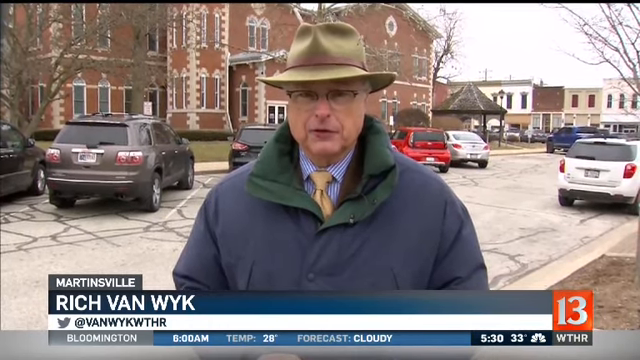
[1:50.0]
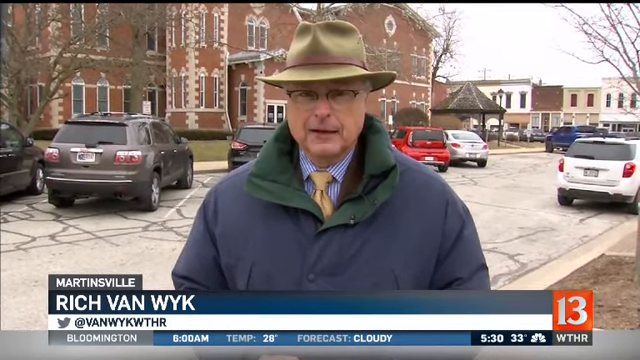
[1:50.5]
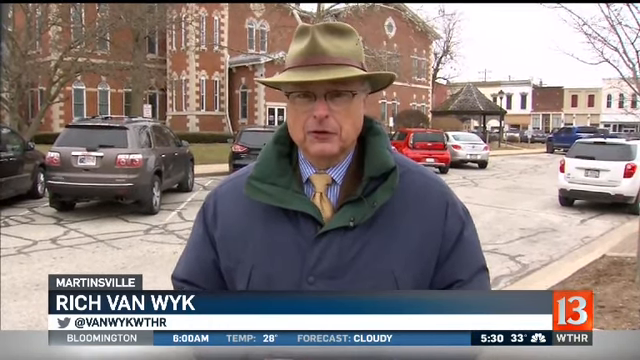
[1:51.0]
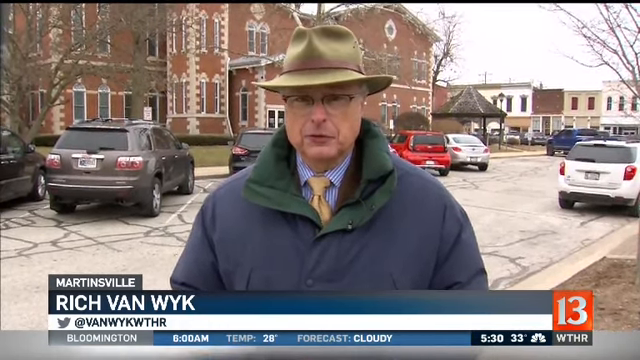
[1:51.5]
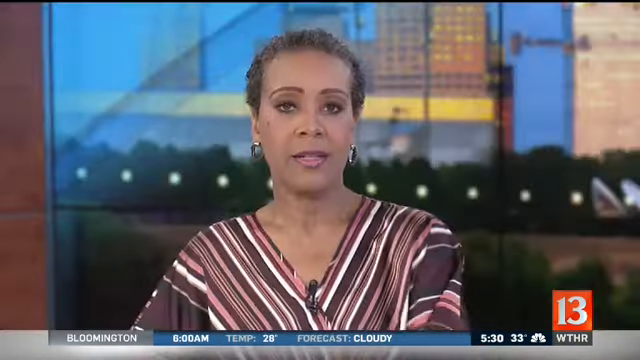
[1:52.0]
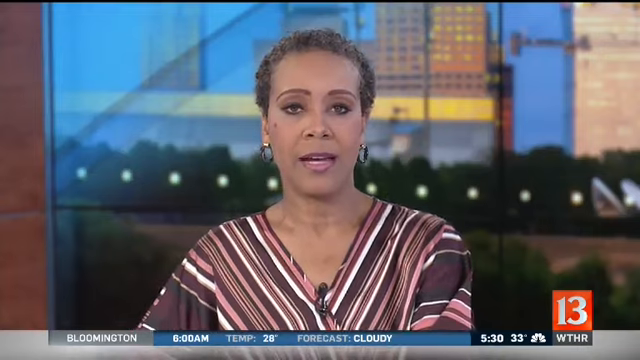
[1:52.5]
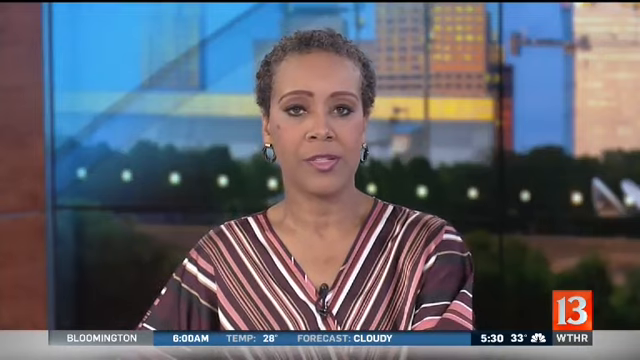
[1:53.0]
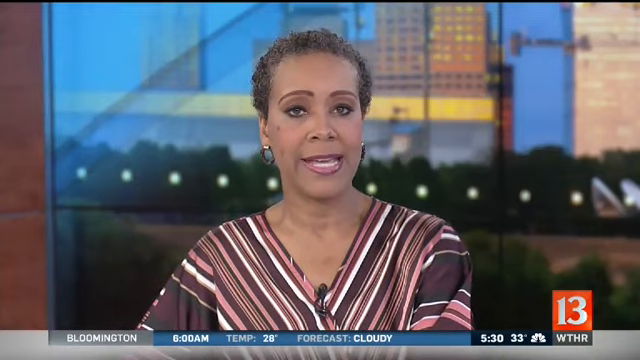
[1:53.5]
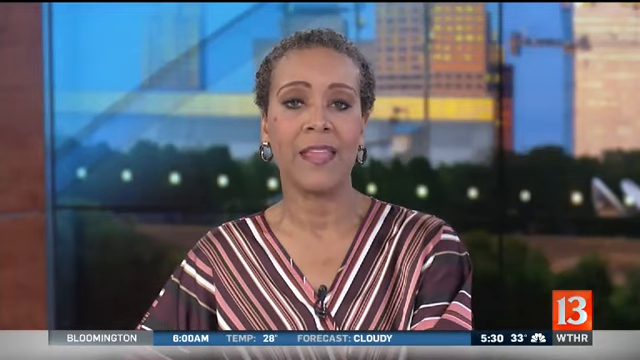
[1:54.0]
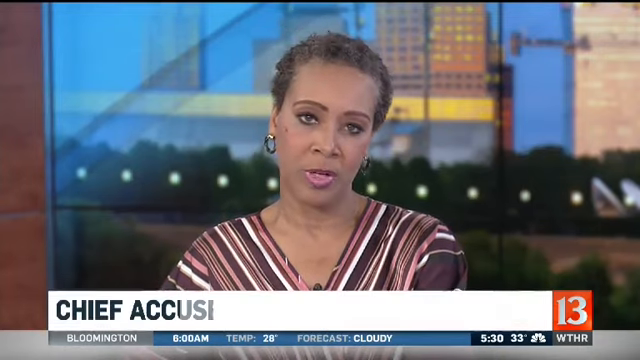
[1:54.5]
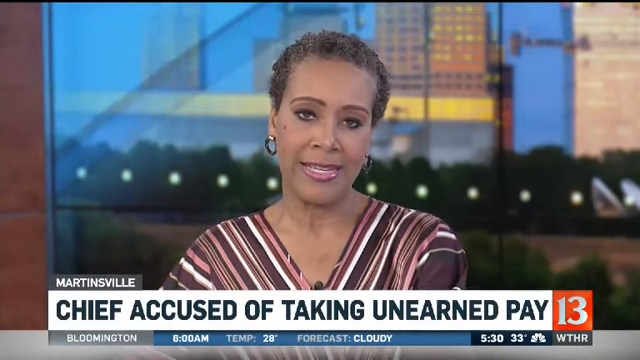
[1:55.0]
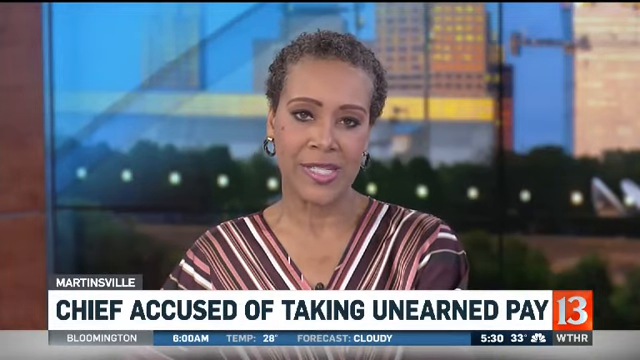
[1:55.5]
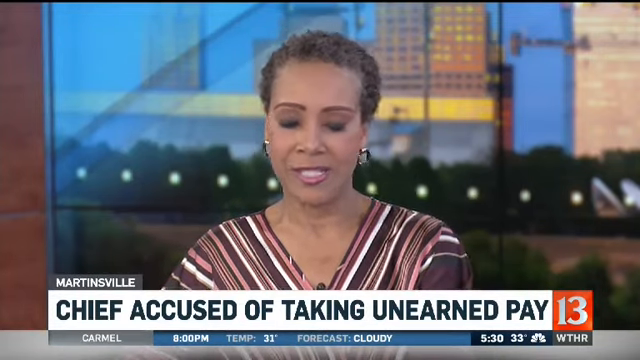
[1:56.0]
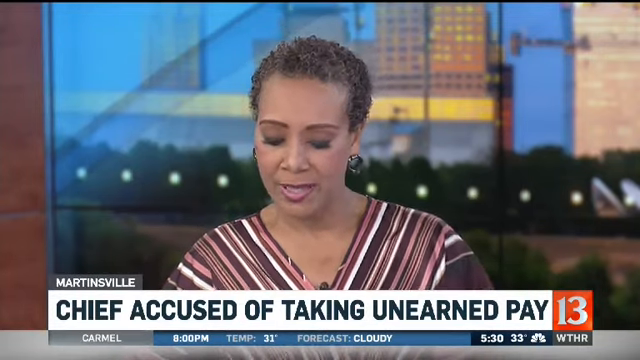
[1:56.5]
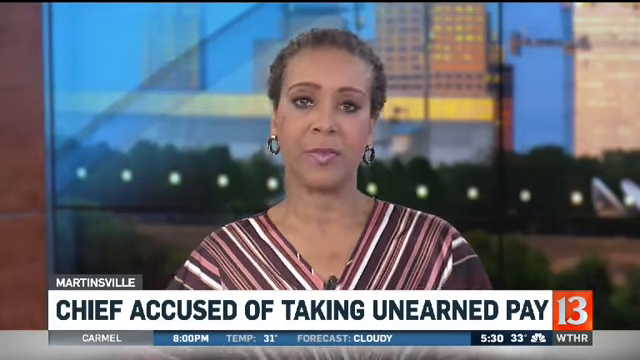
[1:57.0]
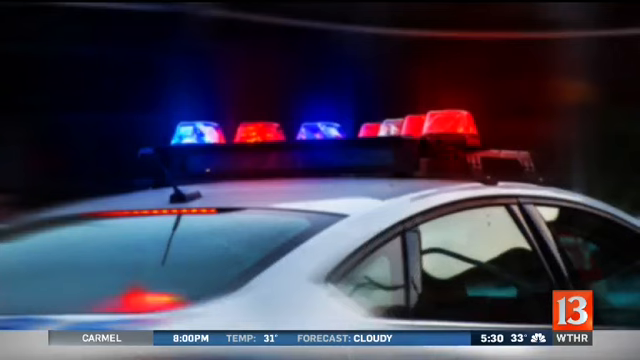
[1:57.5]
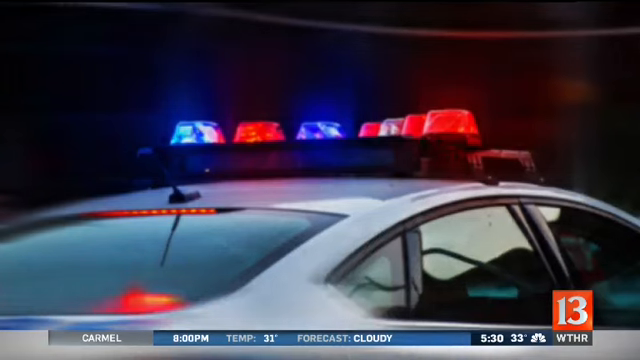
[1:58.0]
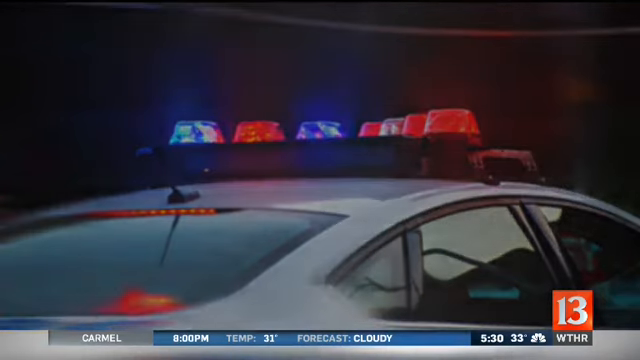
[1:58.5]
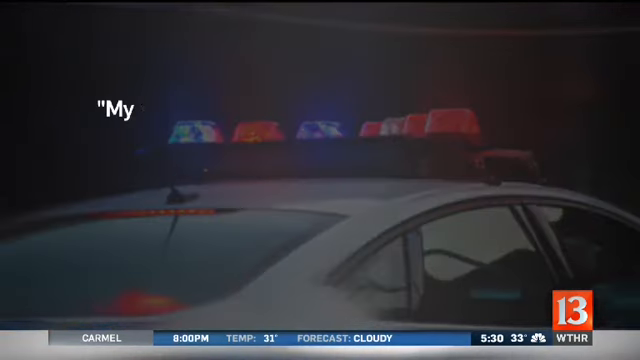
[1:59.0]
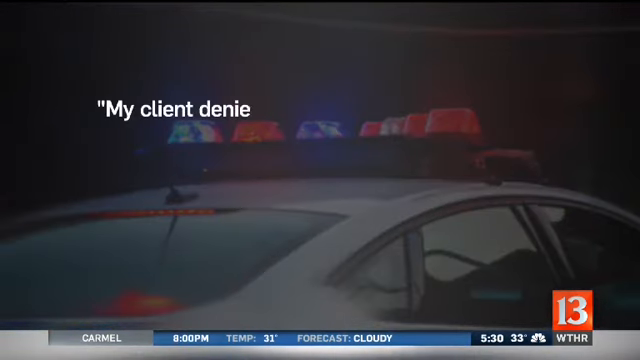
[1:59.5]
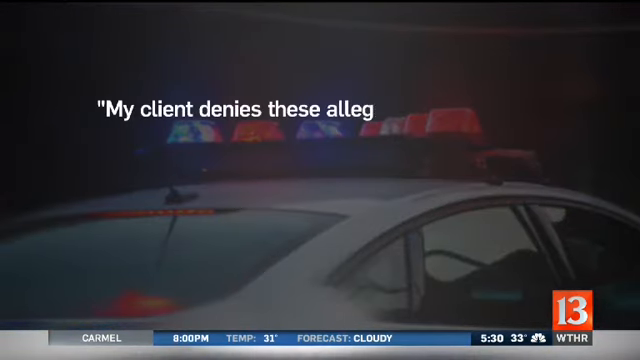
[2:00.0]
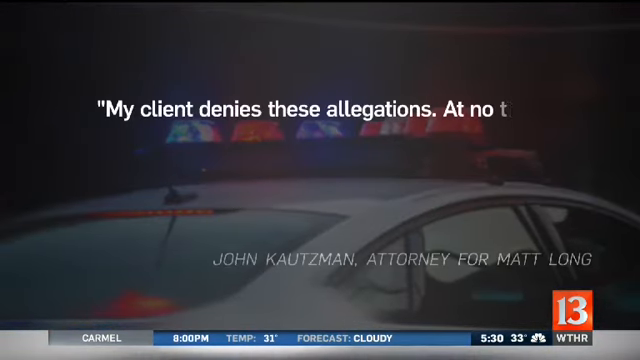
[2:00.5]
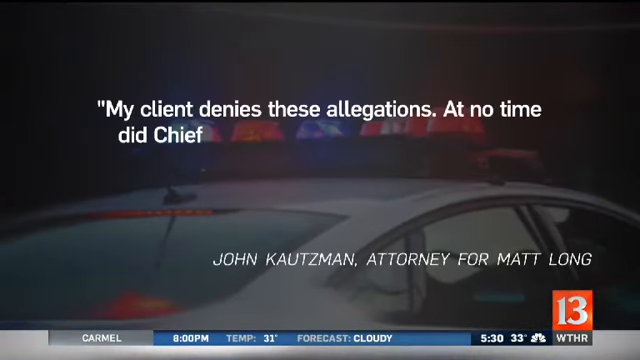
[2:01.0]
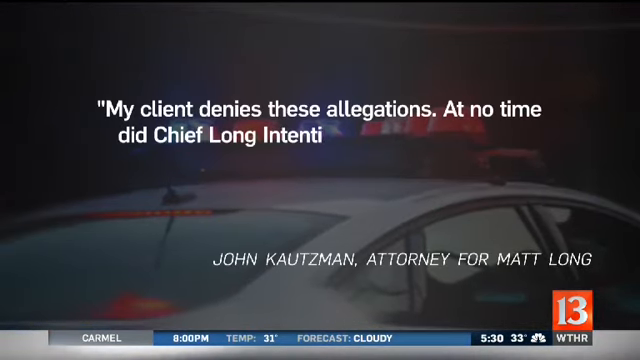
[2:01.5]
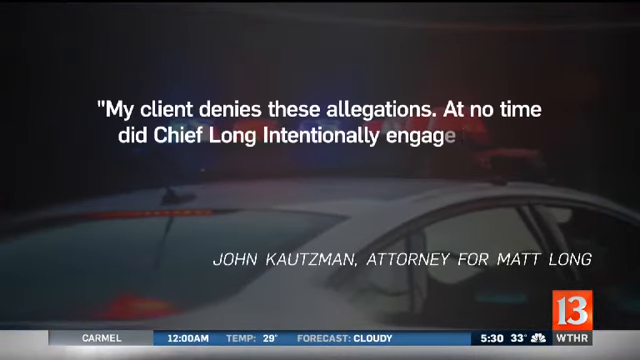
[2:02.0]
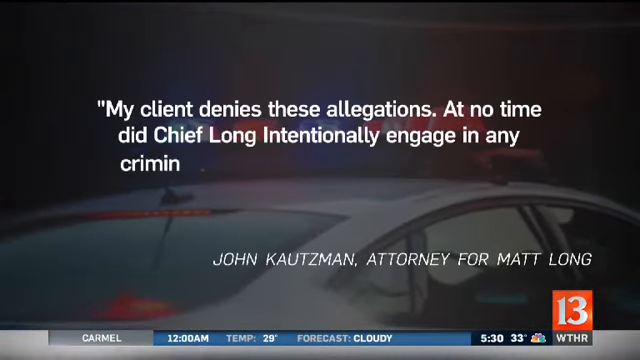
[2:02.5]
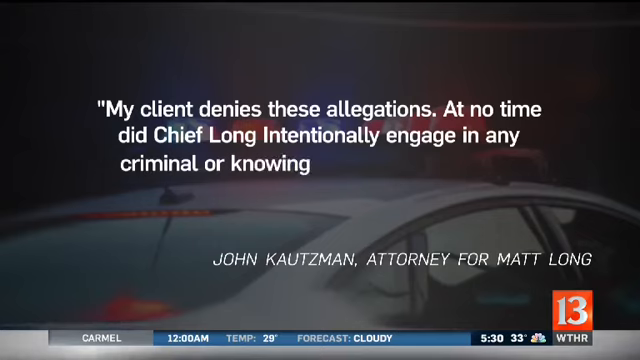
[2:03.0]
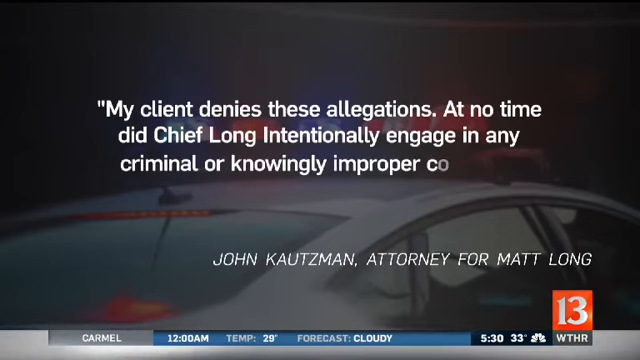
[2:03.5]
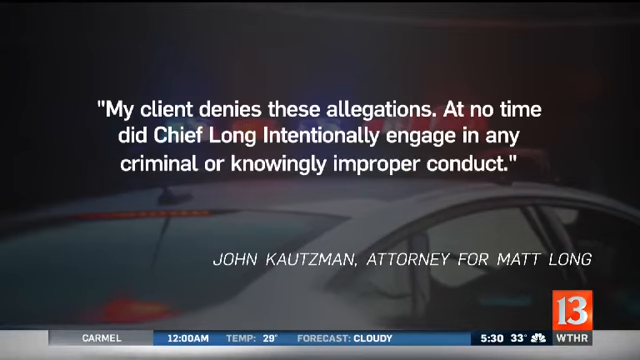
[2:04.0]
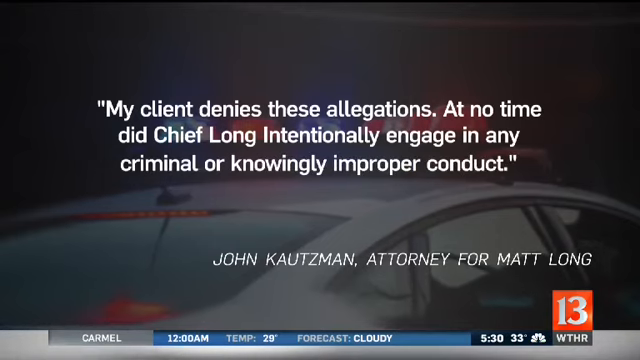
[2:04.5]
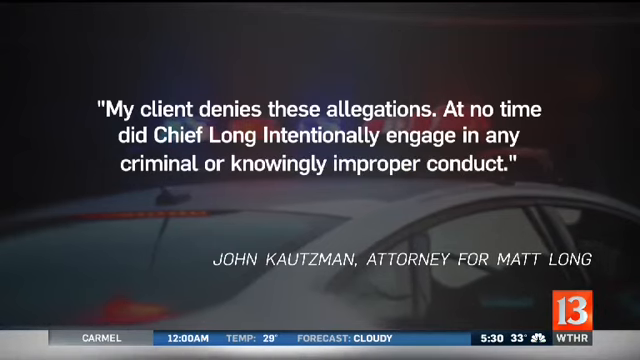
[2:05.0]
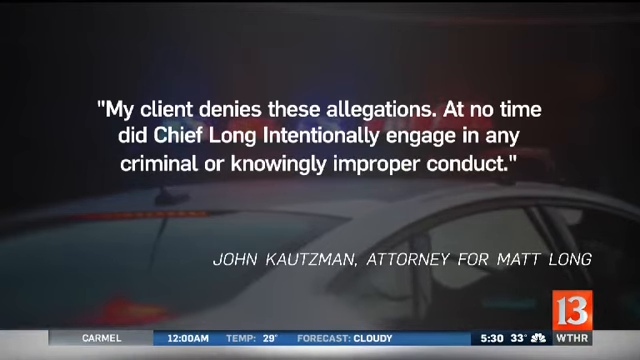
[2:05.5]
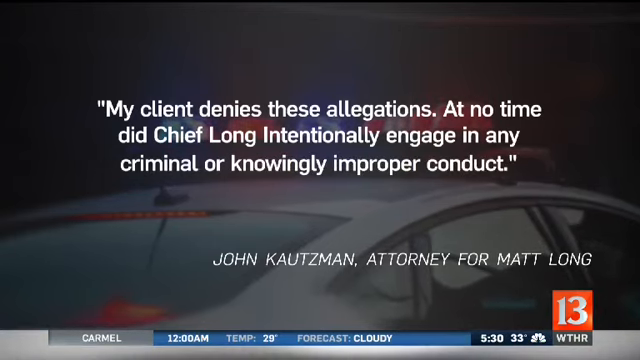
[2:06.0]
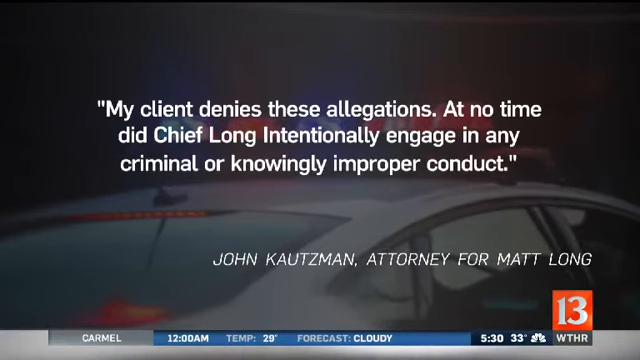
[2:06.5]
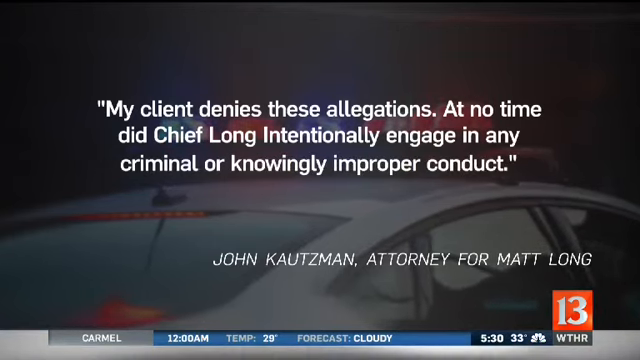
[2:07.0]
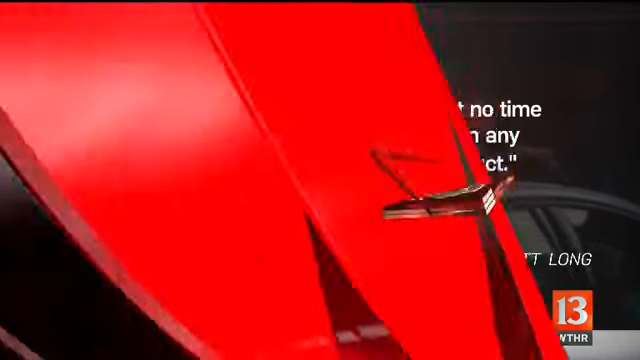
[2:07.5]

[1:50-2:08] The reporter talks to the camera, and then the video cuts to newsroom footage of apparently the lady from earlier, front and center; the guy who appeared to her right is no longer shown. The shot is zoomed in on her as she talks directly to the camera, and she looks down to the left. The video cuts to a stock photo of a police car, and then the screen dims to a black background. White text moves from the upper left-hand corner toward the middle: a quote attributed to John Kotzman, attorney for Matt Long, saying his client denies the allegations.